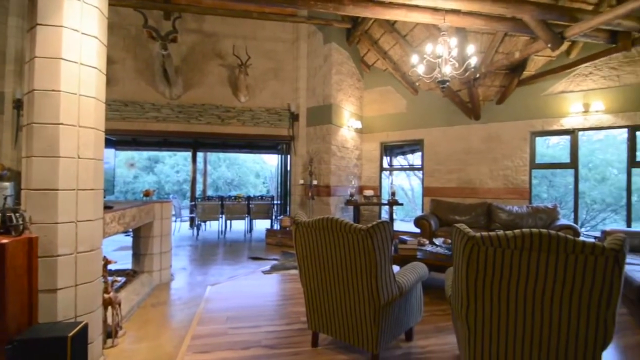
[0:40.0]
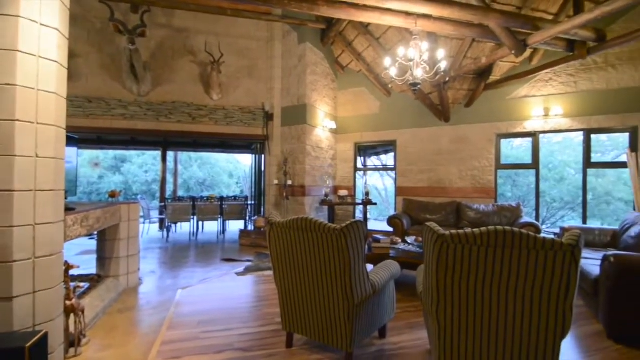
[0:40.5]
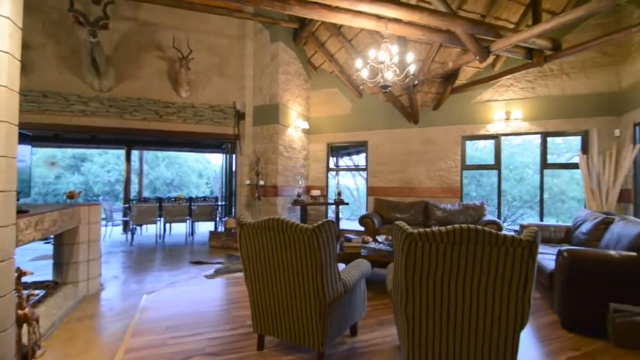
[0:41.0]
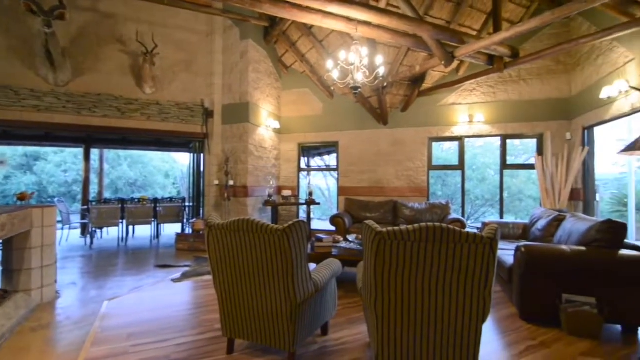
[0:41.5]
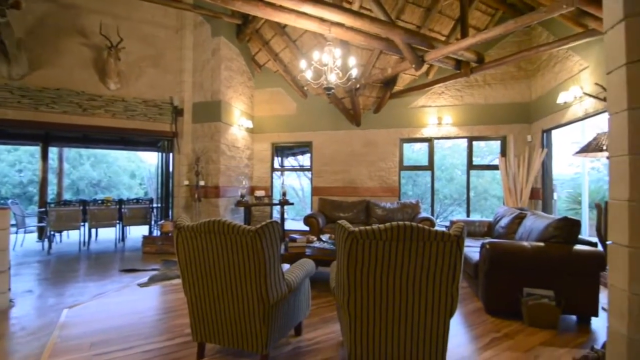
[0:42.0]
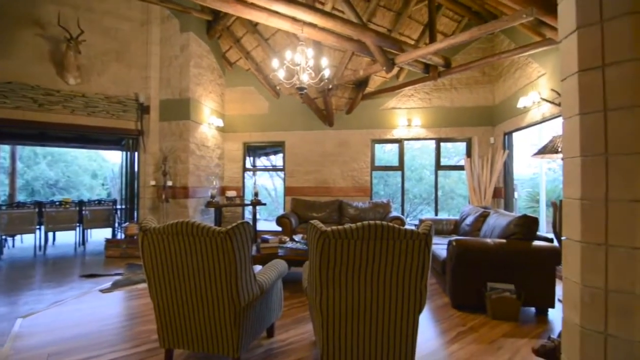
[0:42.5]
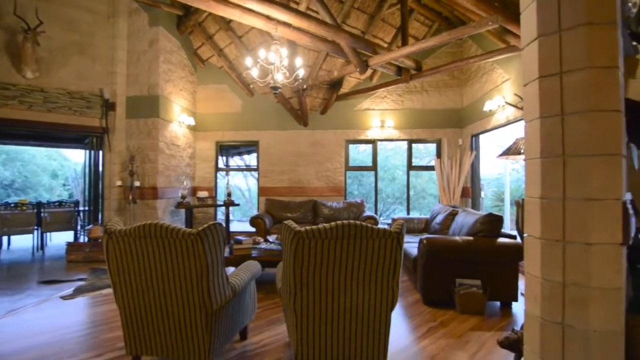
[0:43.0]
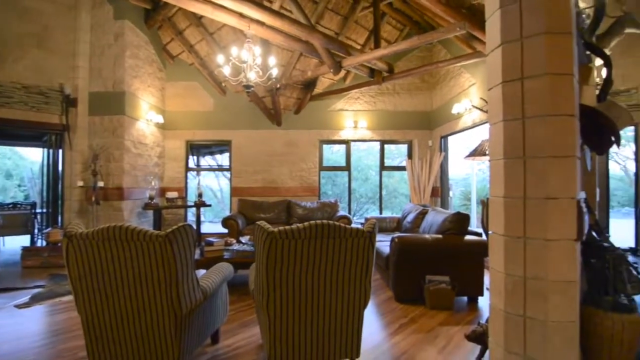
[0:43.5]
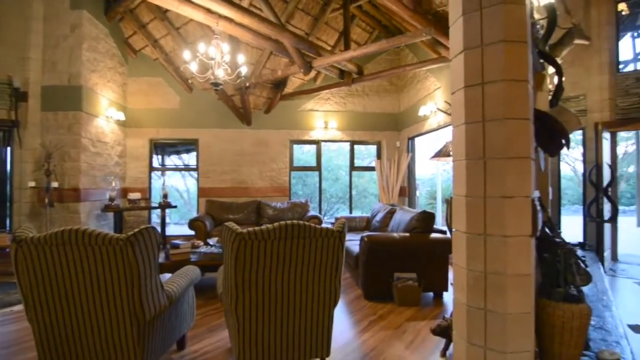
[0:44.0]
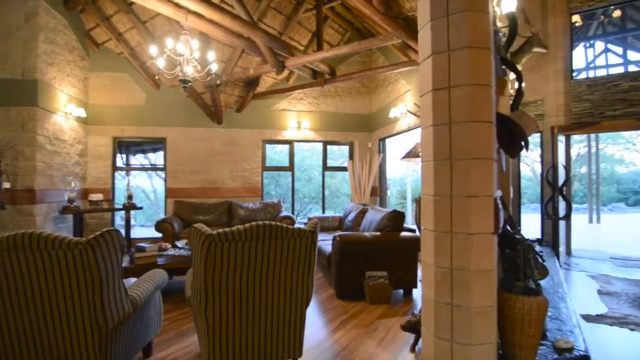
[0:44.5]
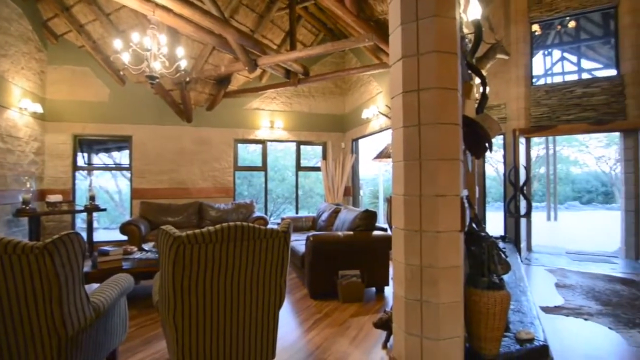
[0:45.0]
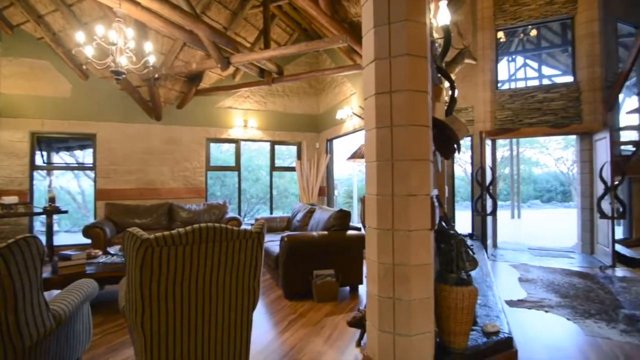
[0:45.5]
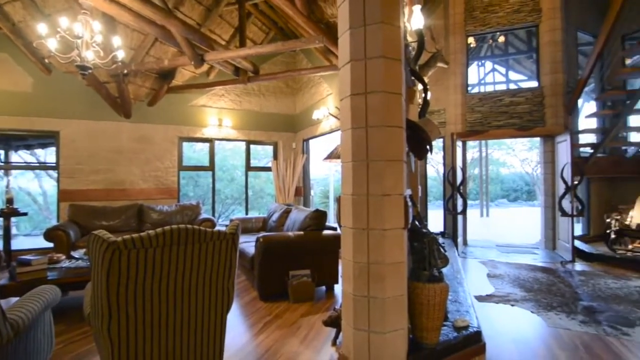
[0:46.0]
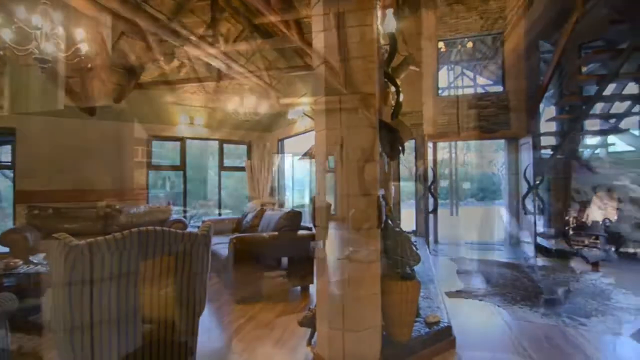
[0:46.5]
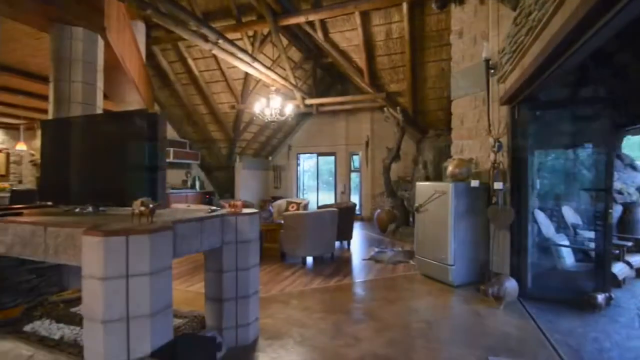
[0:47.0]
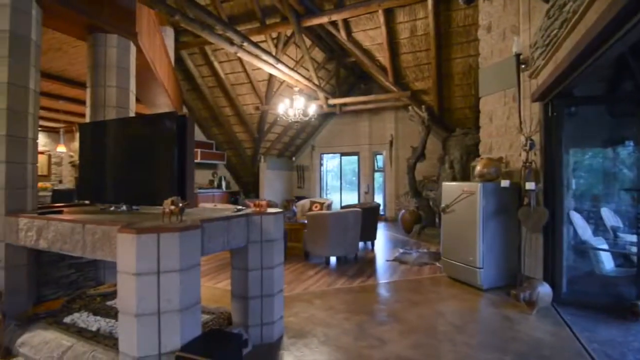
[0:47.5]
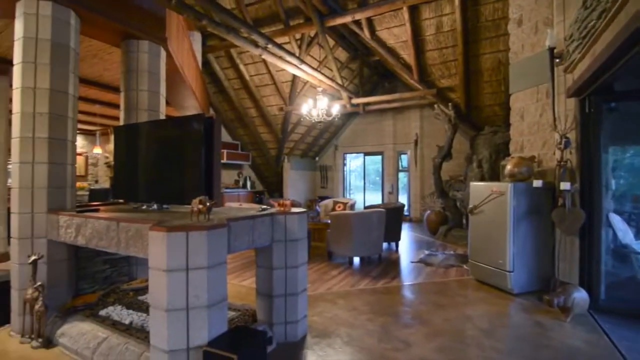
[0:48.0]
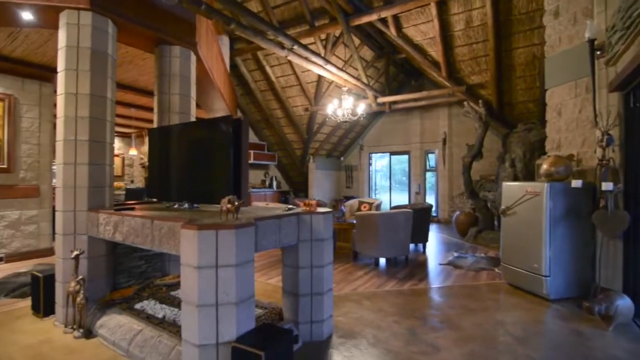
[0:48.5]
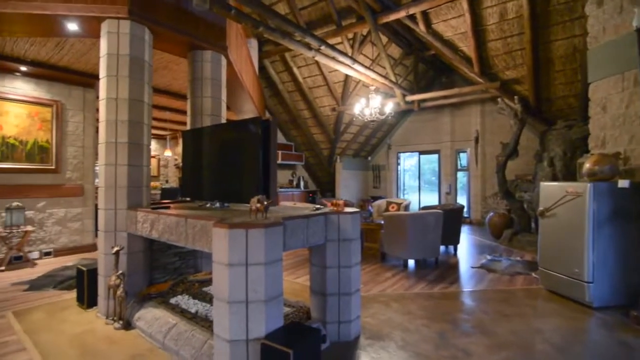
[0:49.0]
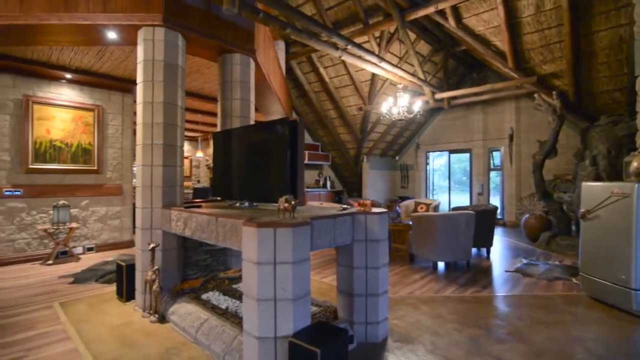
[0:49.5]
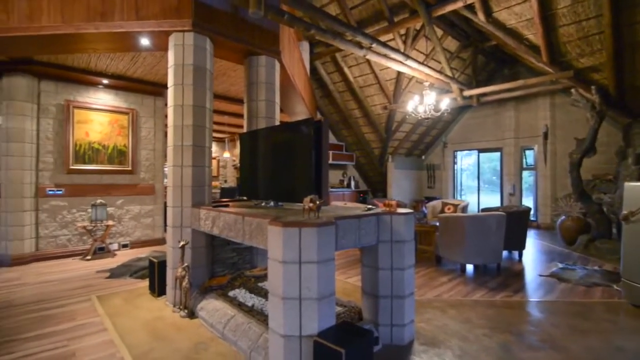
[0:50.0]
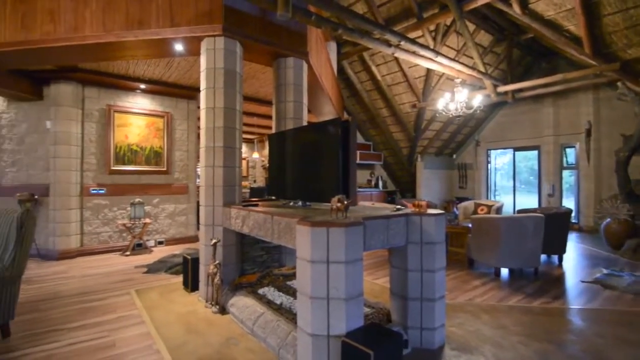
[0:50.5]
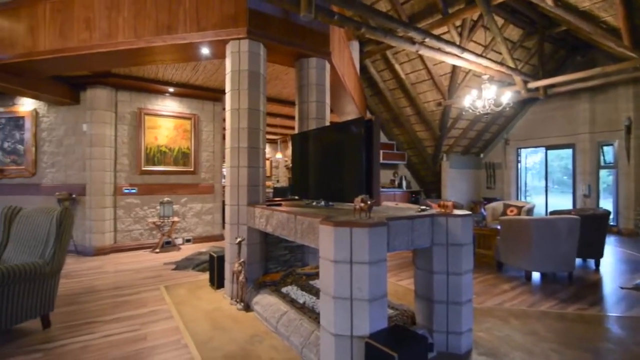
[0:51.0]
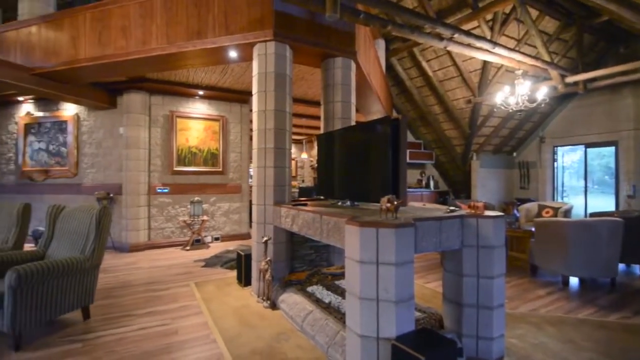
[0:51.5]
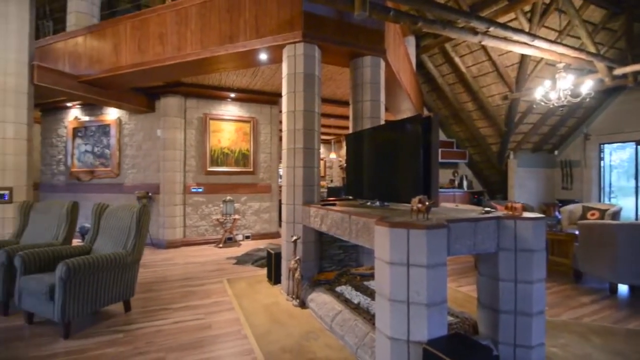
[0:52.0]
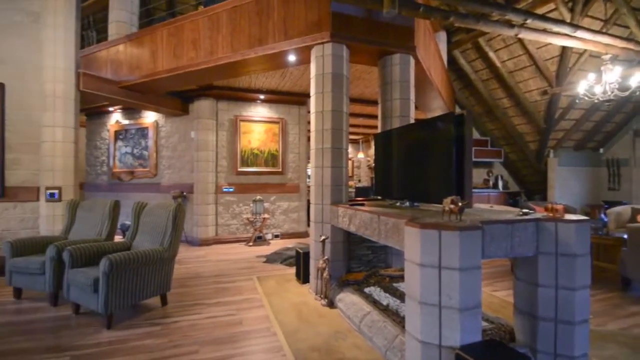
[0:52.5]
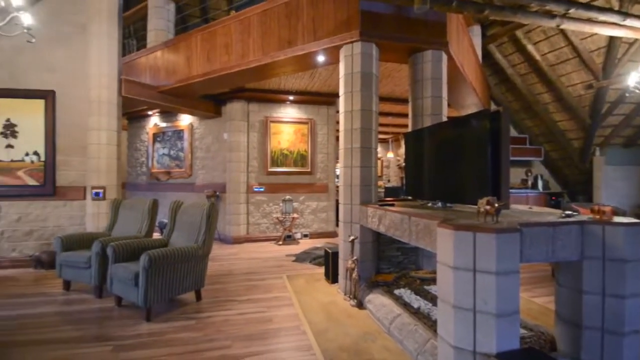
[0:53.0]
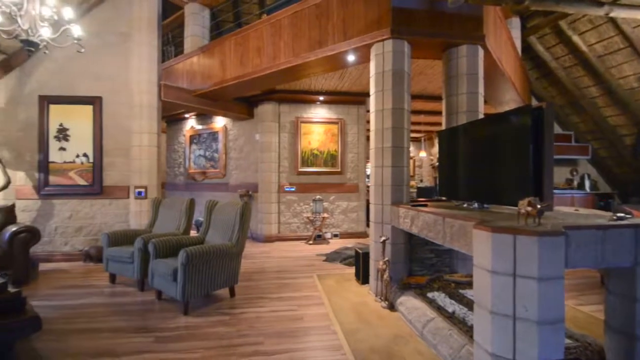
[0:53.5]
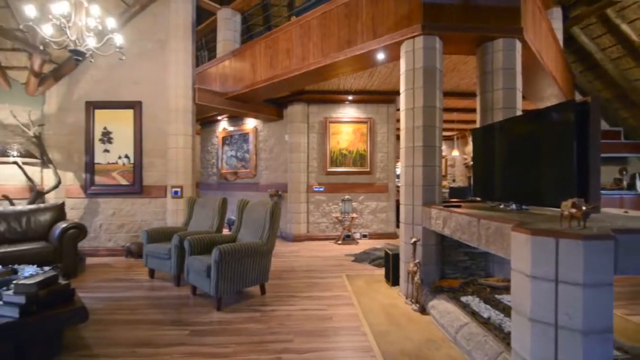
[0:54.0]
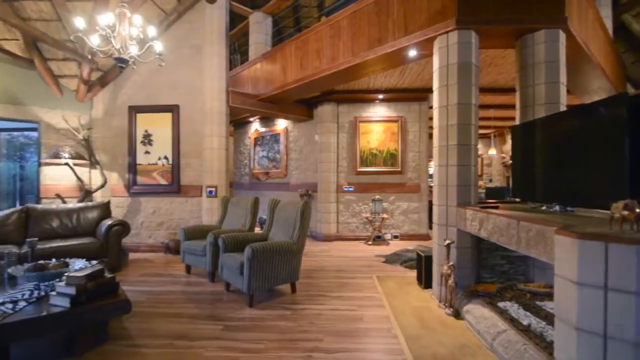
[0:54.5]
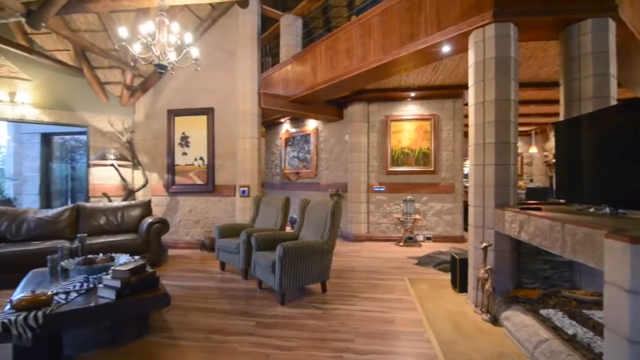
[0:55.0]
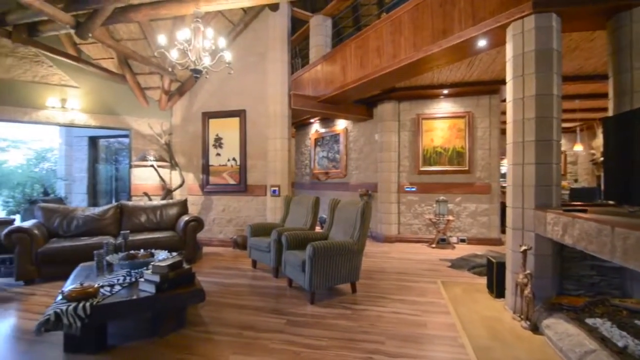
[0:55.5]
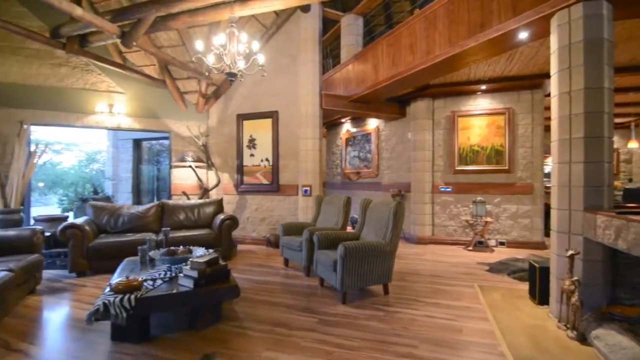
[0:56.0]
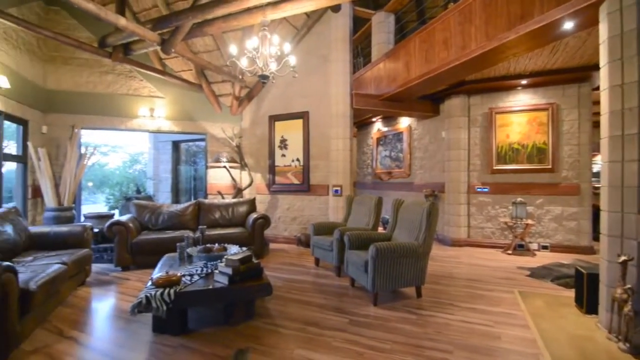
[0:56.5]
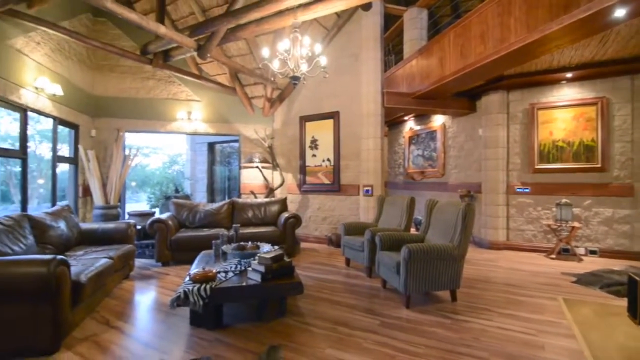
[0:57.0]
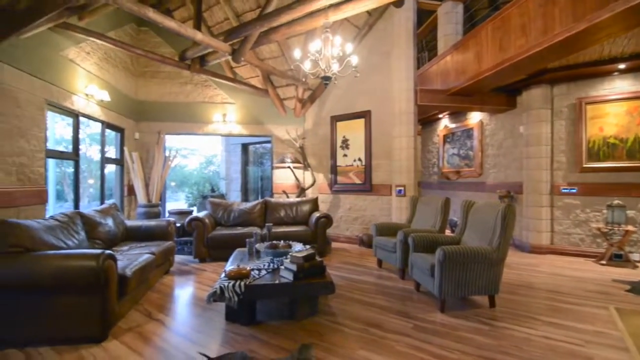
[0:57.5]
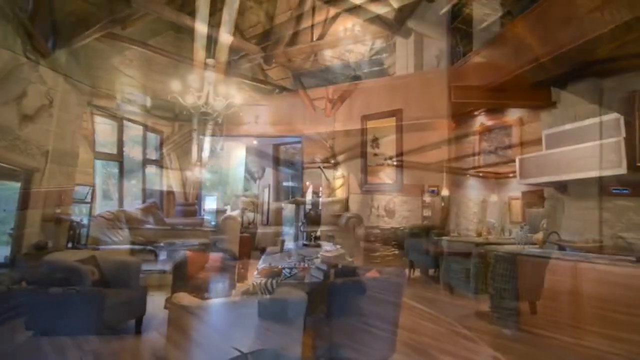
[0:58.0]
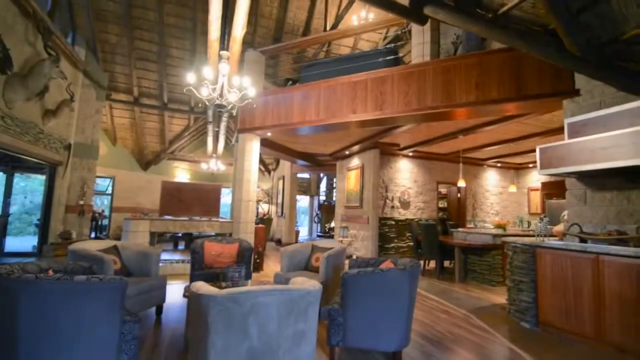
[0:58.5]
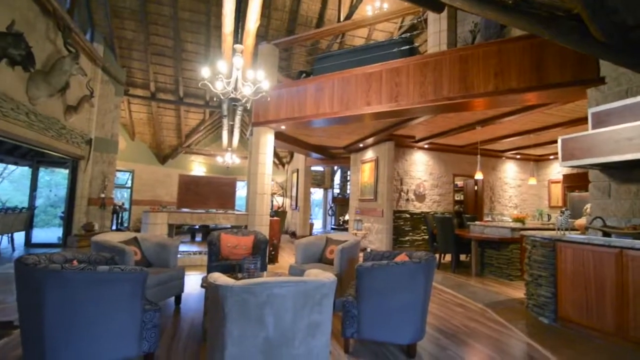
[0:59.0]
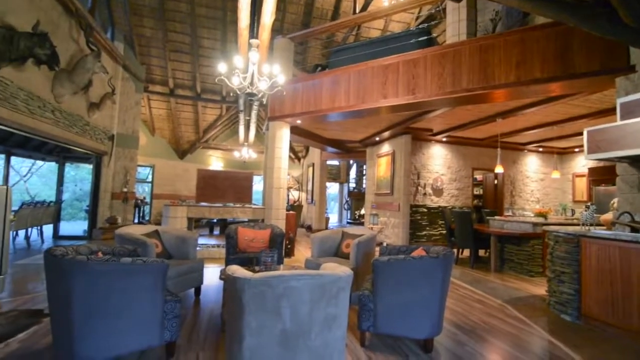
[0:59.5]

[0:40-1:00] Inside the house is an open floor plan with columns and tiled countertops. The video pans from the living room to the kitchen to a more casual seating area. Through the back windows there appears to be perhaps a body of water. The house is decorated very nicely and has a big screen TV. All the lights are on, including lights over the pictures on the wall, and there is a chandelier. Deer heads or some sort of antelope heads are mounted on the side of the wall. There are windows everywhere and exposed beams inside. Apparently a stairwell going up is visible, from which the first floor can be overlooked.